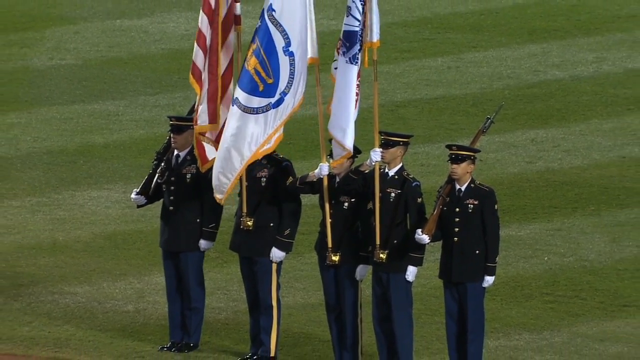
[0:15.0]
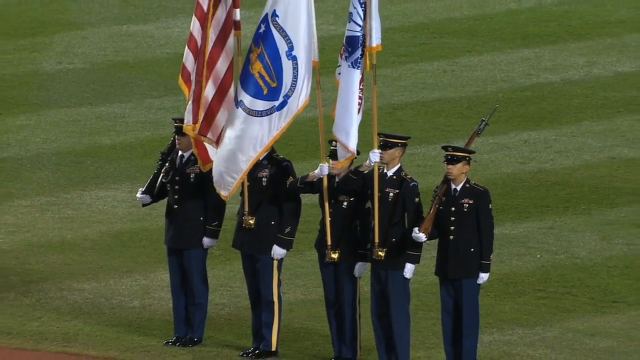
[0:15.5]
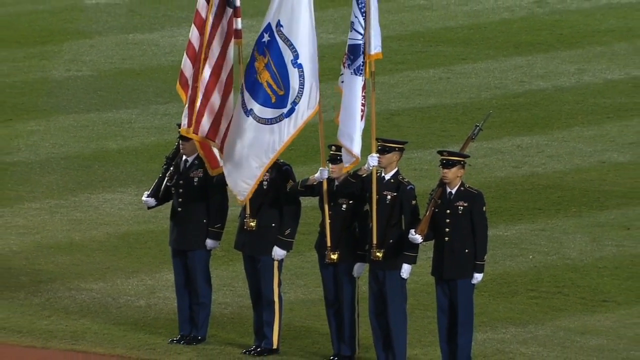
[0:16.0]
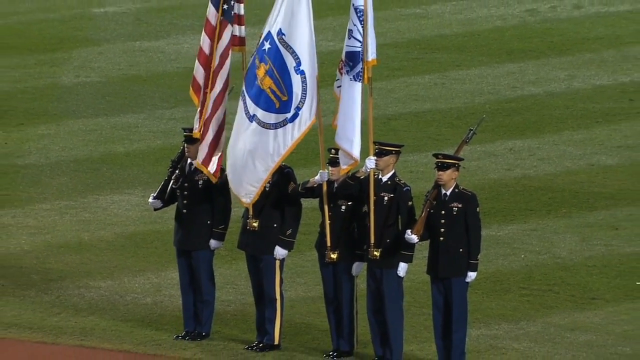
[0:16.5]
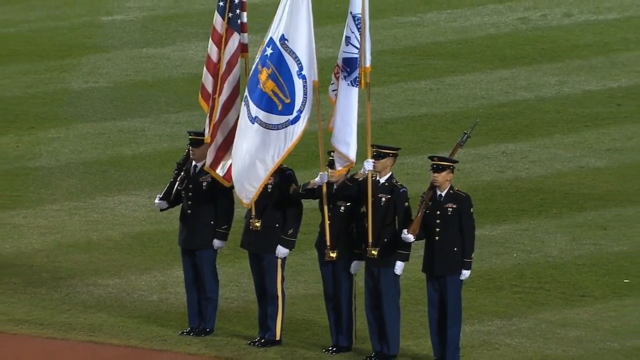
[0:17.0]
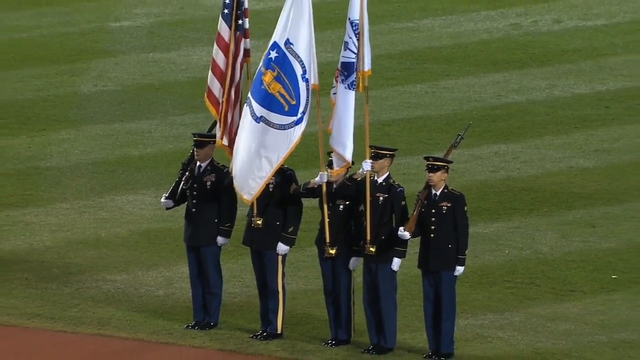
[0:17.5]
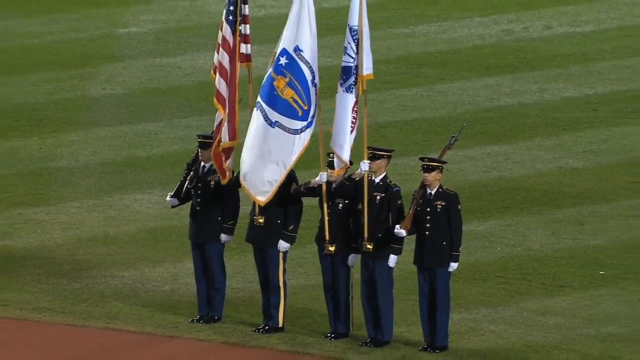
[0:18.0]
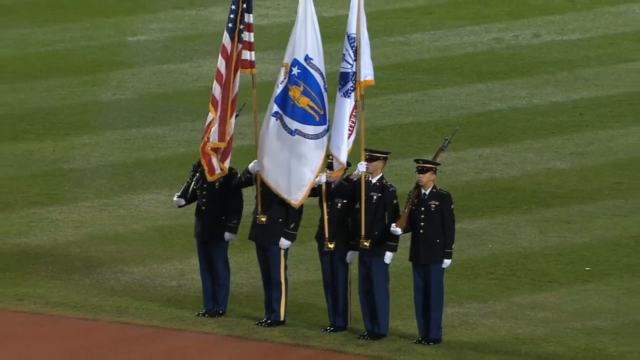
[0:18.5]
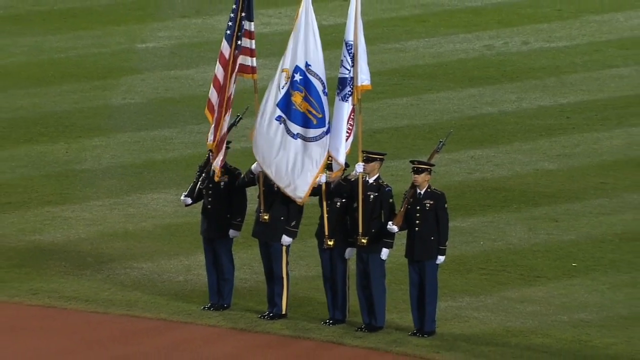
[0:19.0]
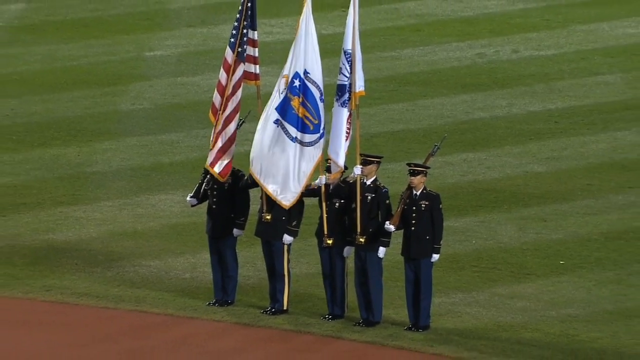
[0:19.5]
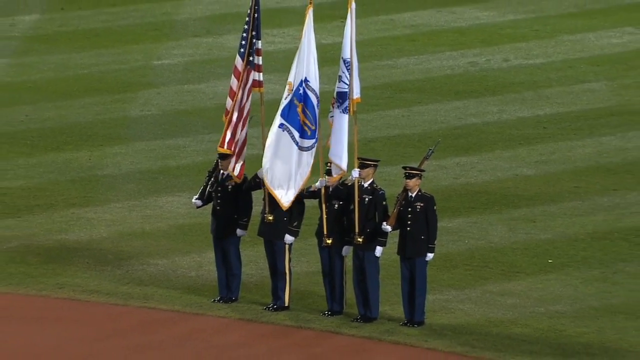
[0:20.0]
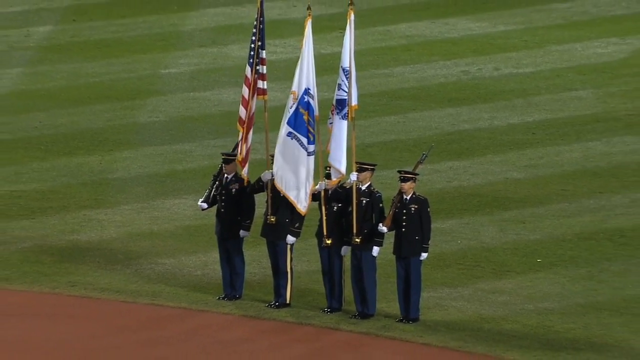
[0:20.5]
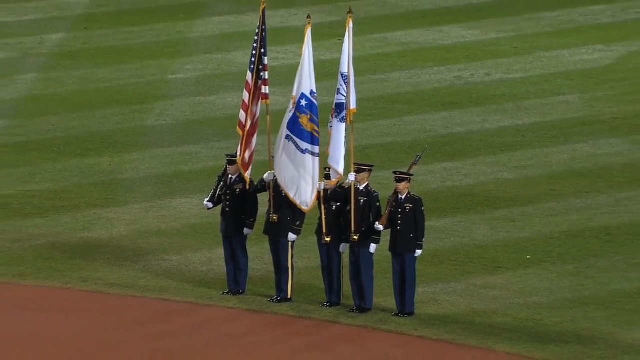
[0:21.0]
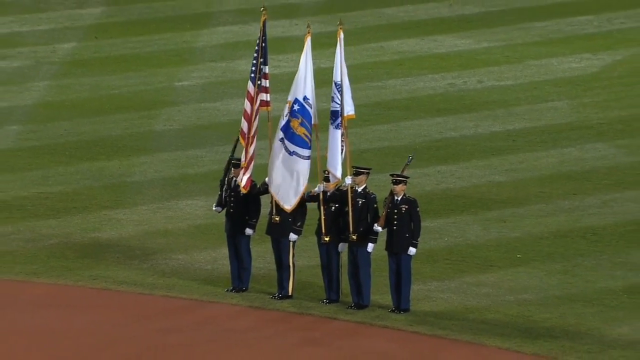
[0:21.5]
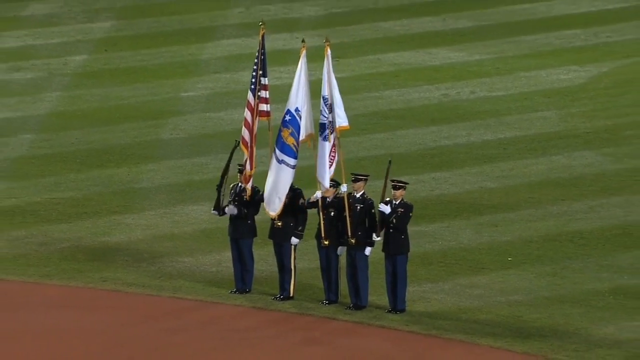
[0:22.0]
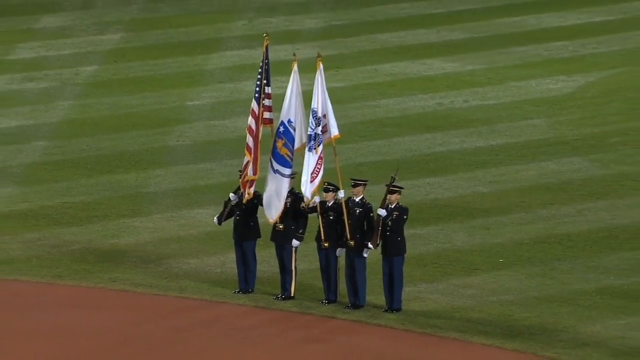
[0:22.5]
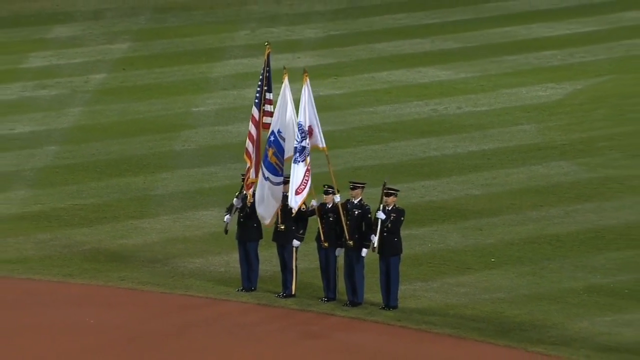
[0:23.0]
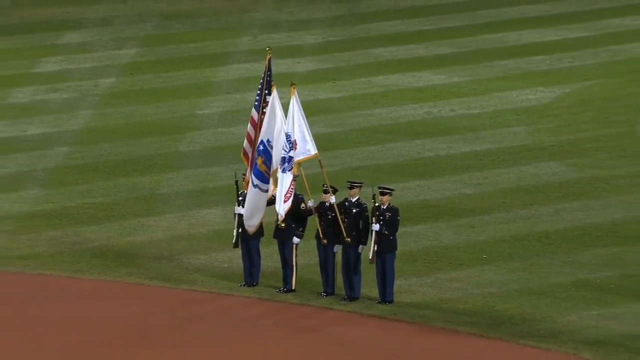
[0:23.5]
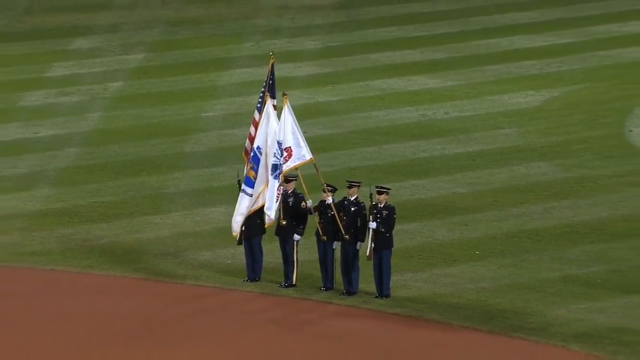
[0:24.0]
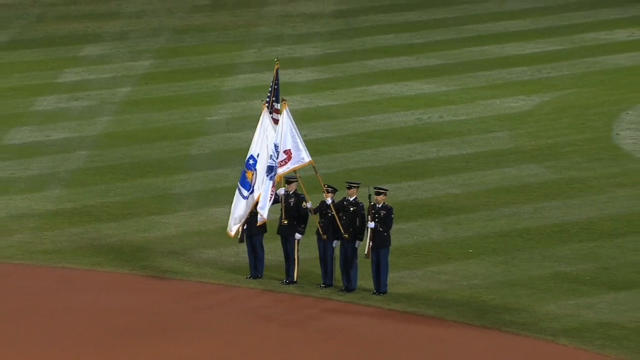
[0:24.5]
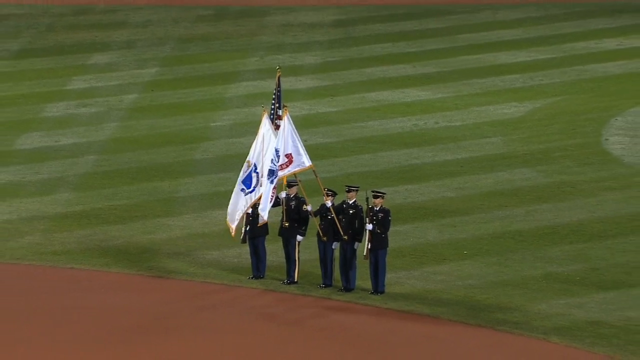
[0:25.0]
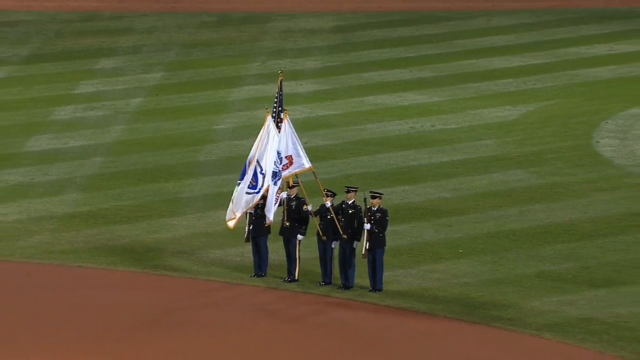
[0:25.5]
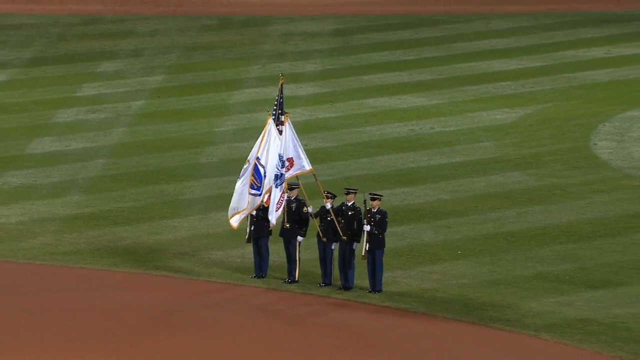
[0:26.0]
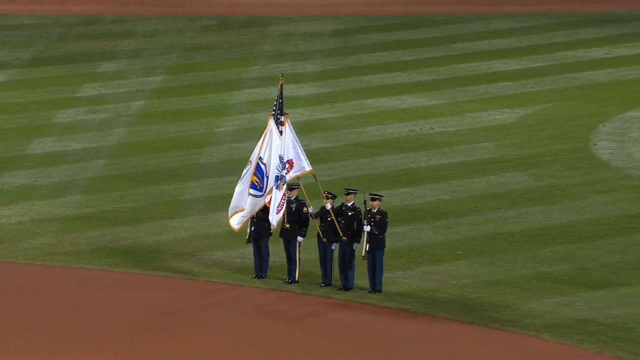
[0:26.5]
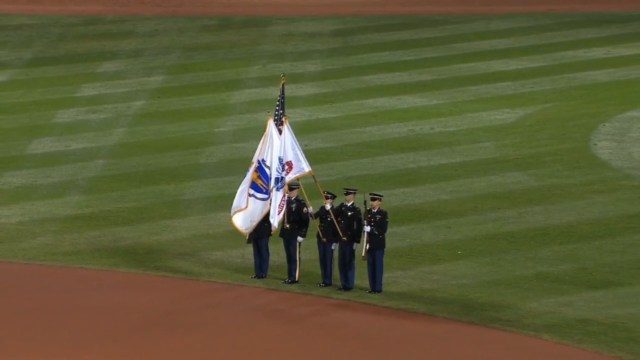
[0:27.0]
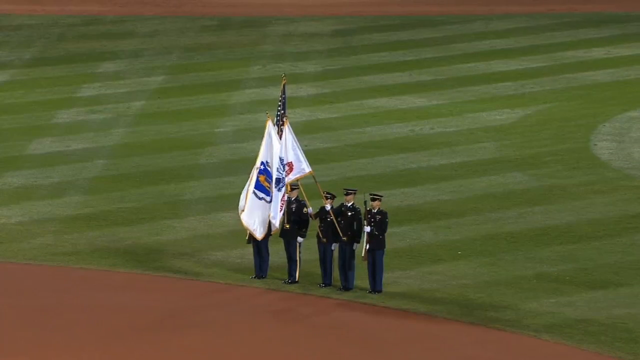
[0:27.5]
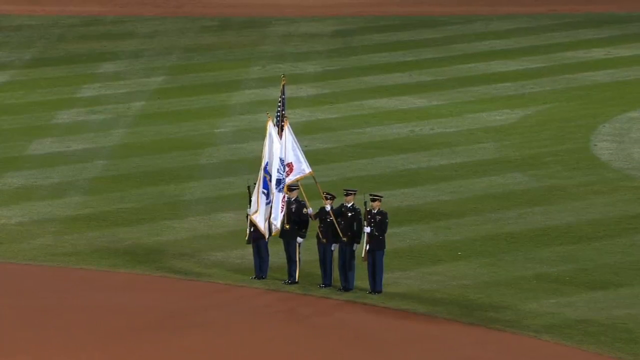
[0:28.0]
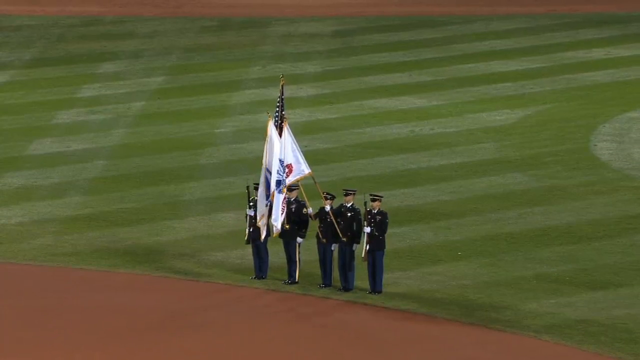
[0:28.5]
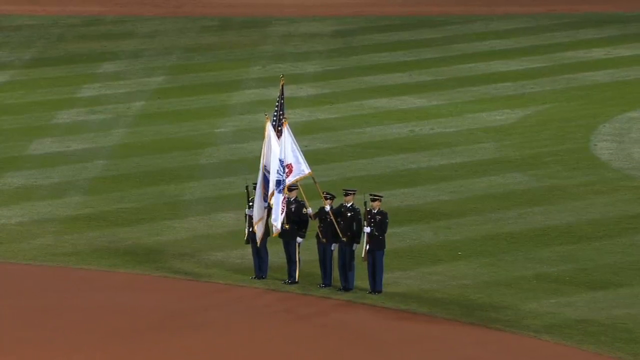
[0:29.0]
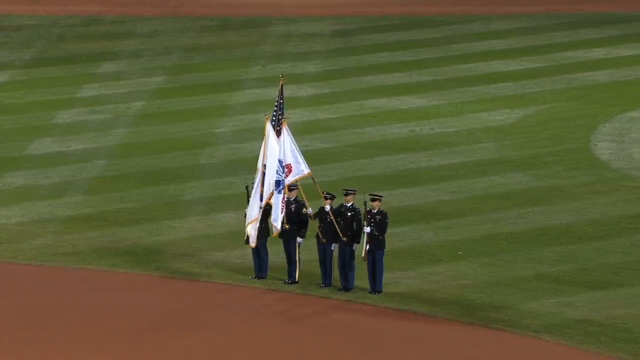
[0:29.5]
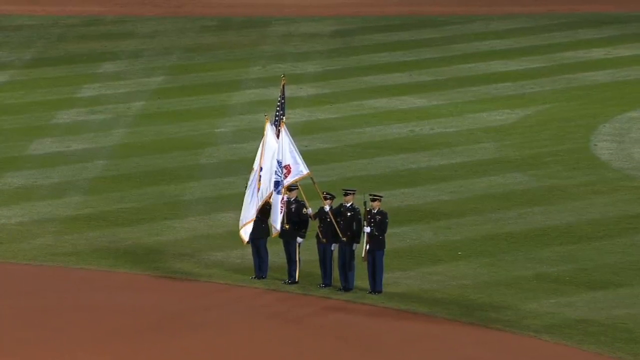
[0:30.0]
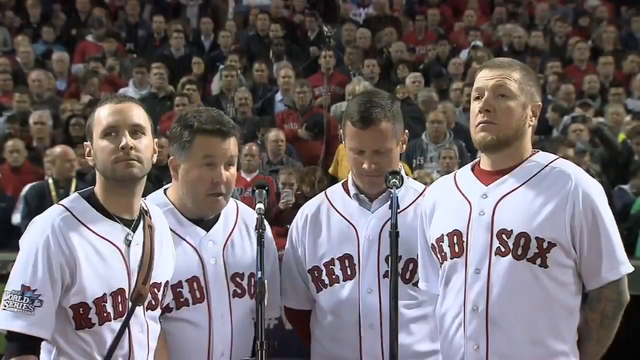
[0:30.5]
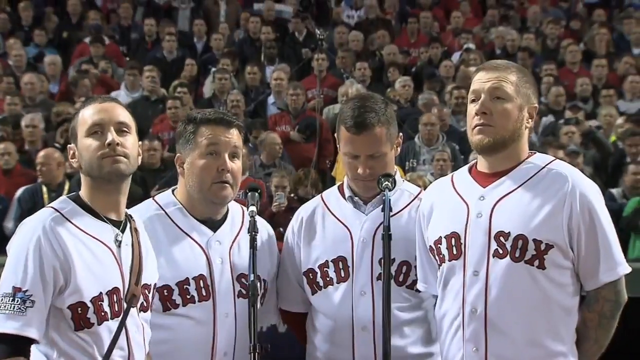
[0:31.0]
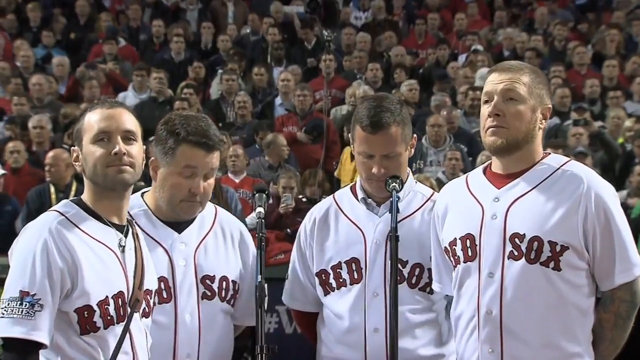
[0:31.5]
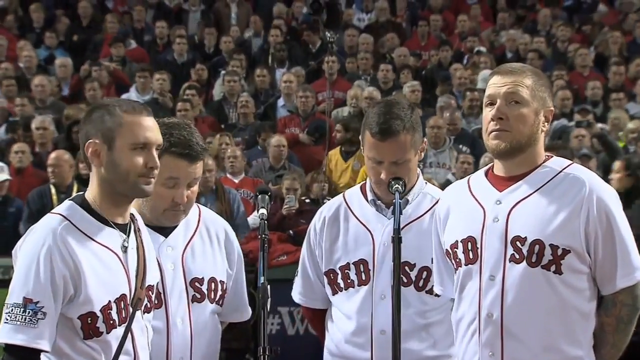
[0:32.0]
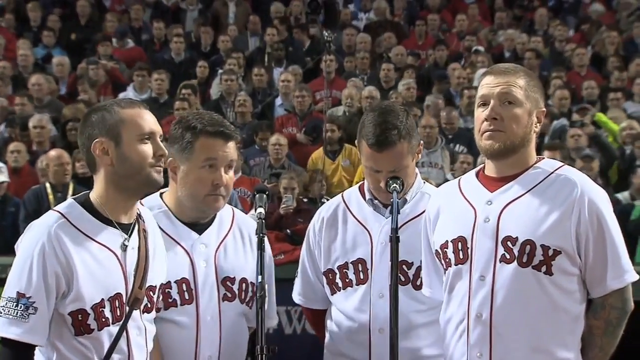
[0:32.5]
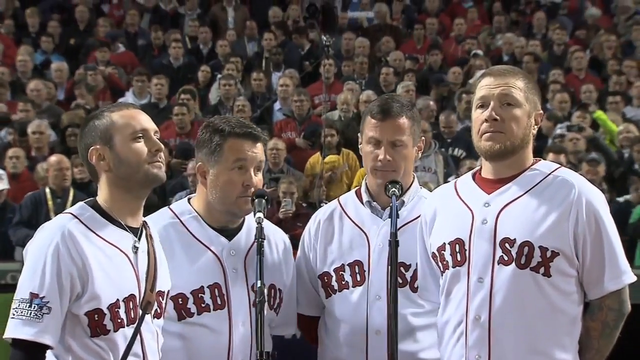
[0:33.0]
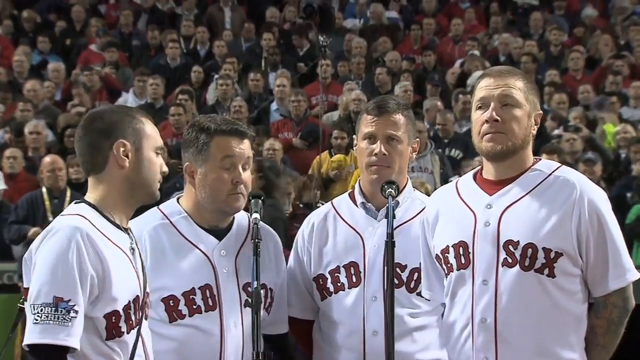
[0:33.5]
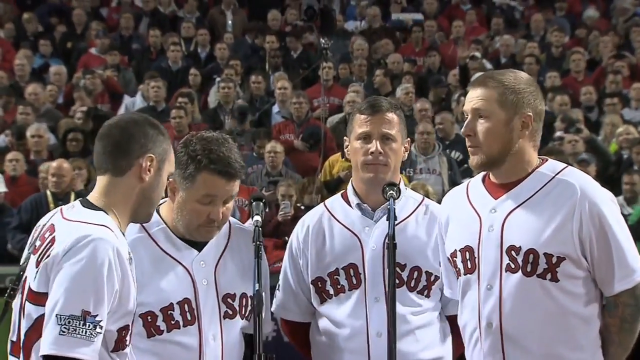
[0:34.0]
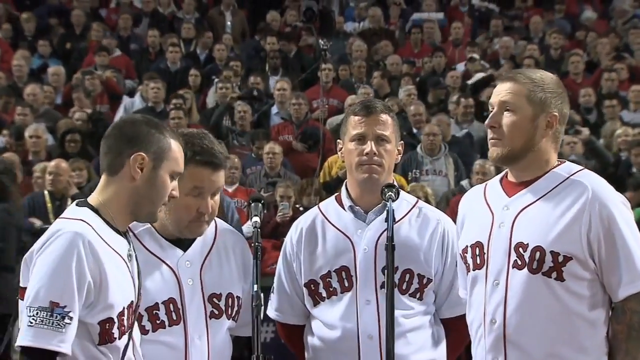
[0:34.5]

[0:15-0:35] The camera pans to the color guard holding the flags and zooms out. One flag is the American flag, and two are white flags with small crests. The shot zooms out further, revealing part of the brown dirt of the baseball field where players run. The camera spends more time zooming out on the color guard, then pans briefly to four men wearing Red Sox jerseys, showing this is a Red Sox game. The men, all white, stand with their arms clasped behind their backs around two microphones, looking around, apparently waiting to start singing. Their jerseys are white with "Red Sox" in red. Behind them is a large crowd, many of whom are waving while they are on camera.